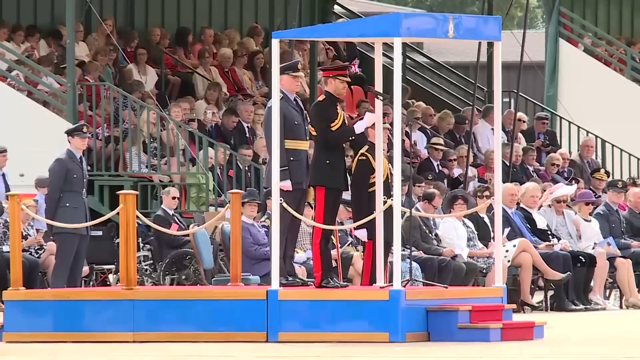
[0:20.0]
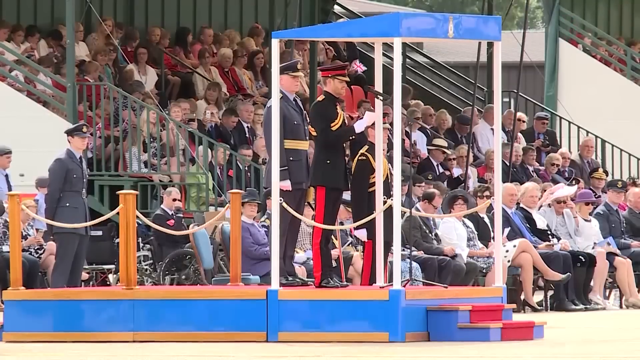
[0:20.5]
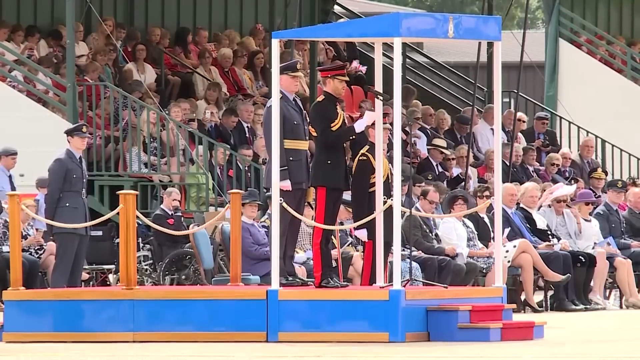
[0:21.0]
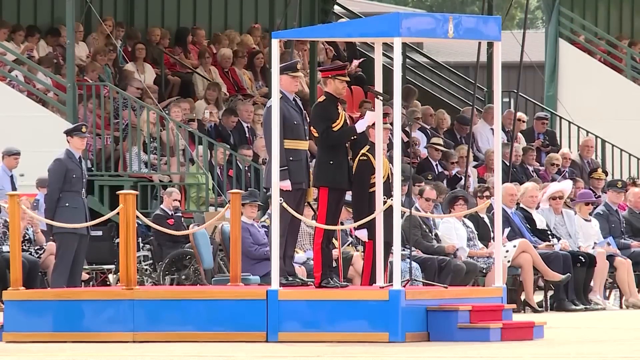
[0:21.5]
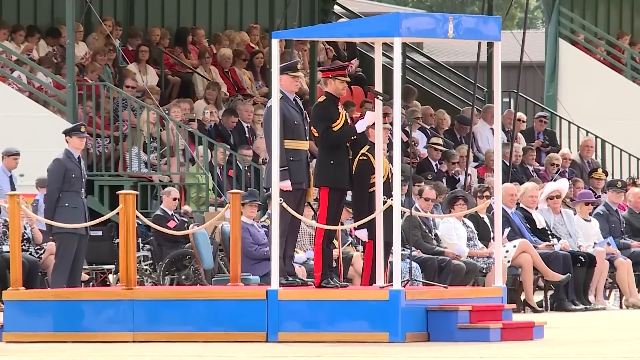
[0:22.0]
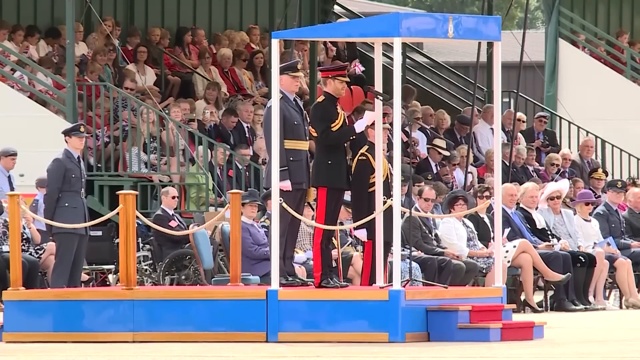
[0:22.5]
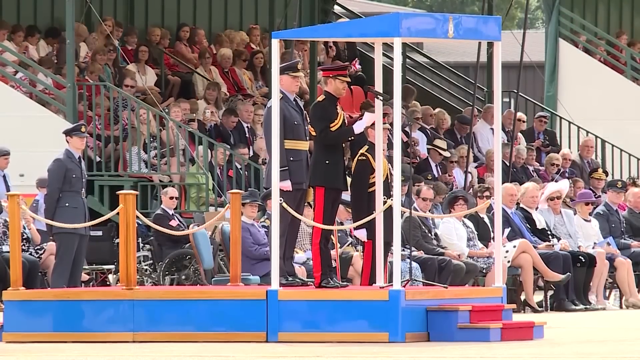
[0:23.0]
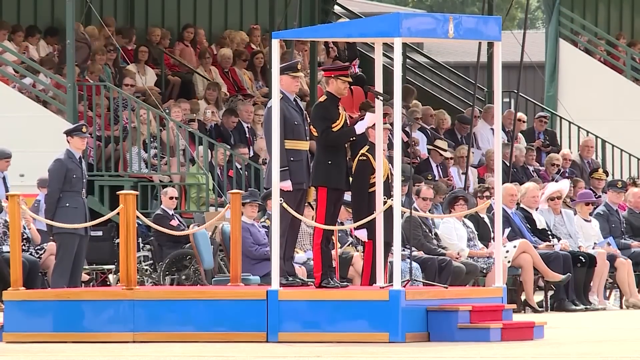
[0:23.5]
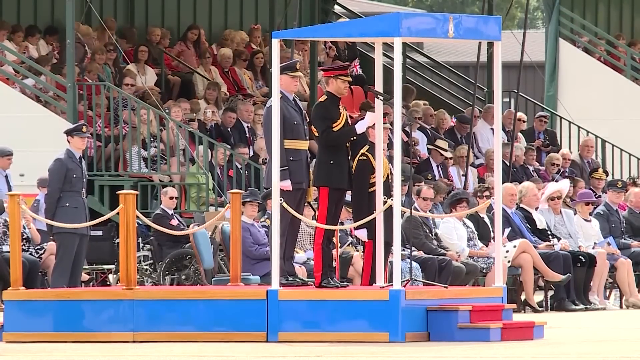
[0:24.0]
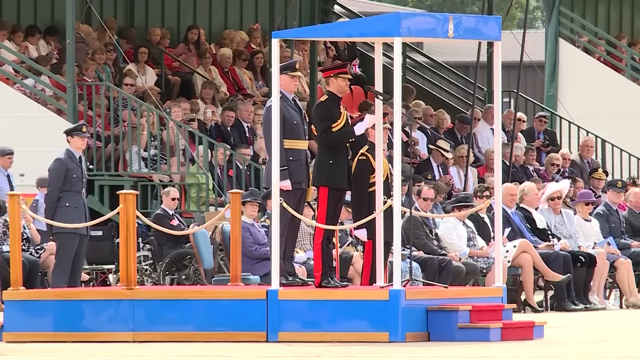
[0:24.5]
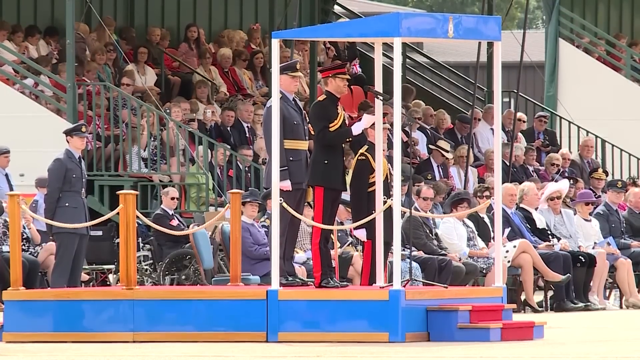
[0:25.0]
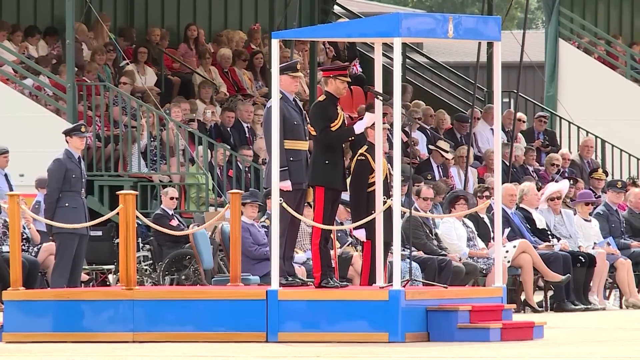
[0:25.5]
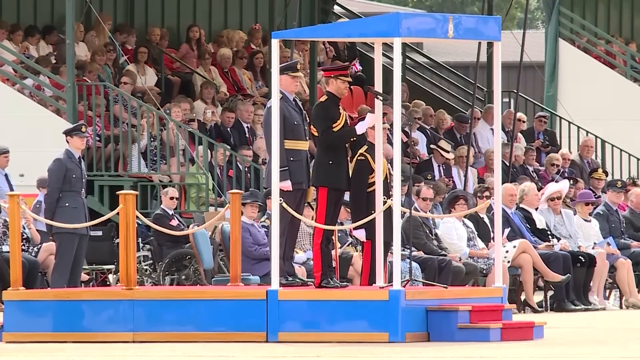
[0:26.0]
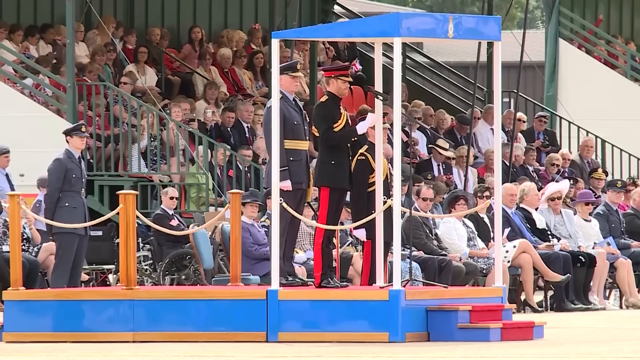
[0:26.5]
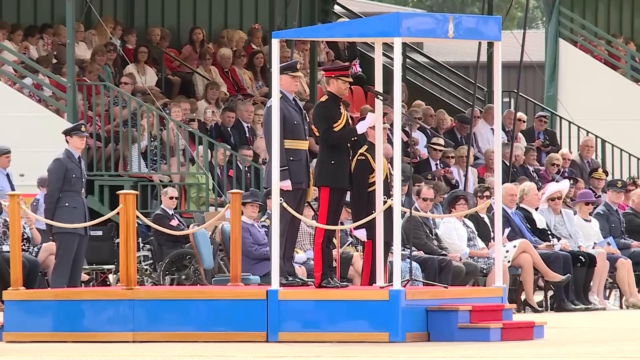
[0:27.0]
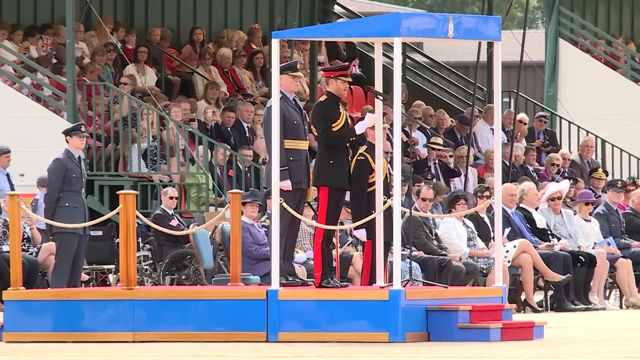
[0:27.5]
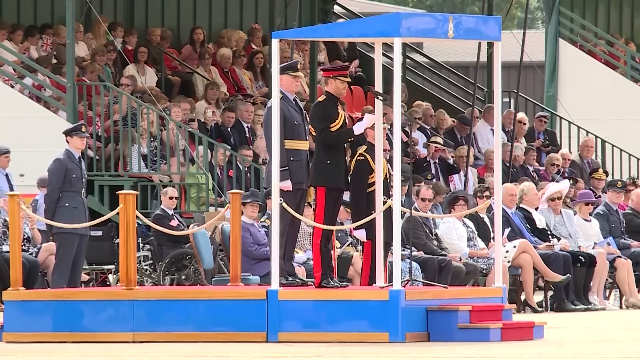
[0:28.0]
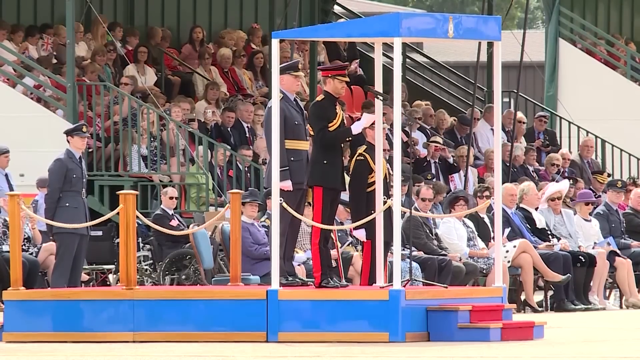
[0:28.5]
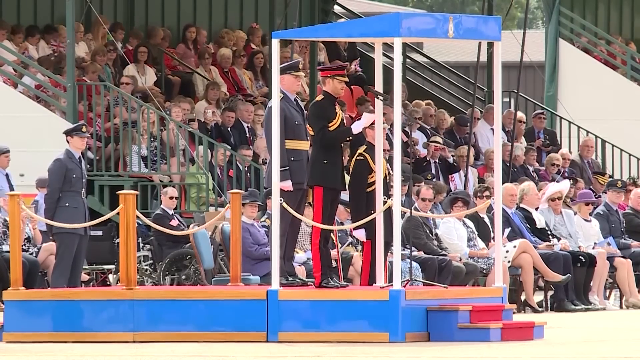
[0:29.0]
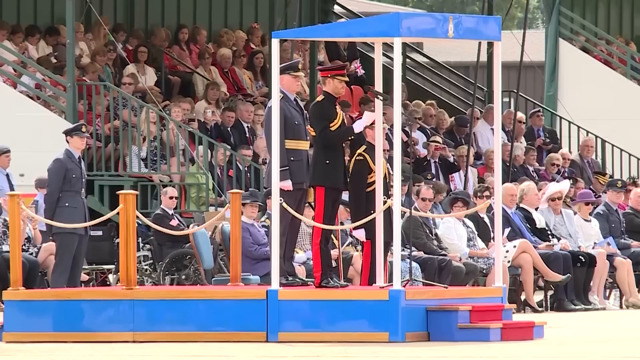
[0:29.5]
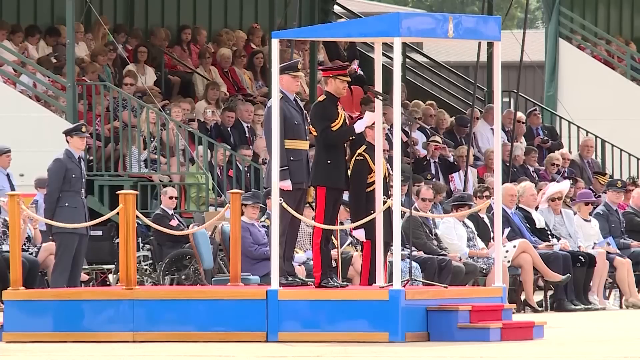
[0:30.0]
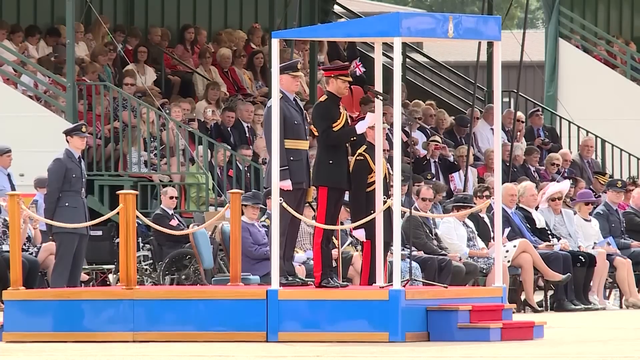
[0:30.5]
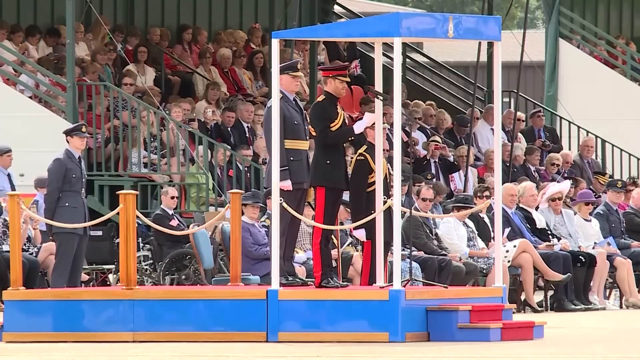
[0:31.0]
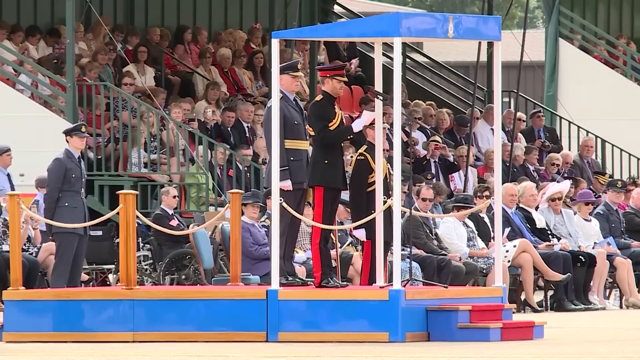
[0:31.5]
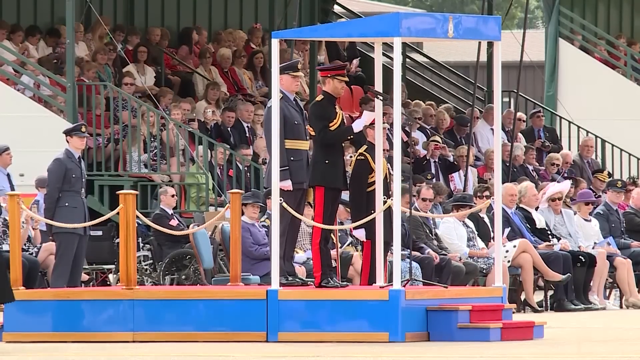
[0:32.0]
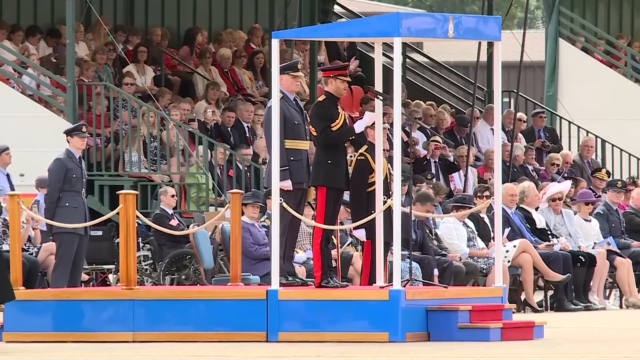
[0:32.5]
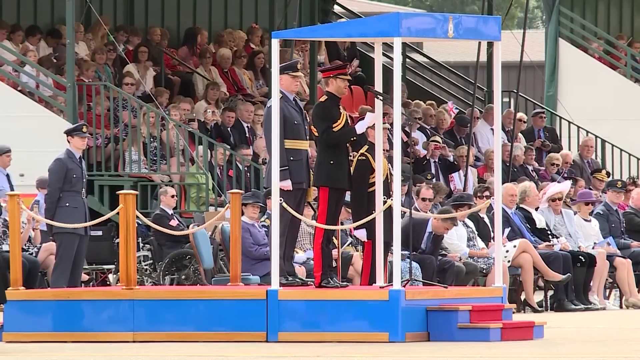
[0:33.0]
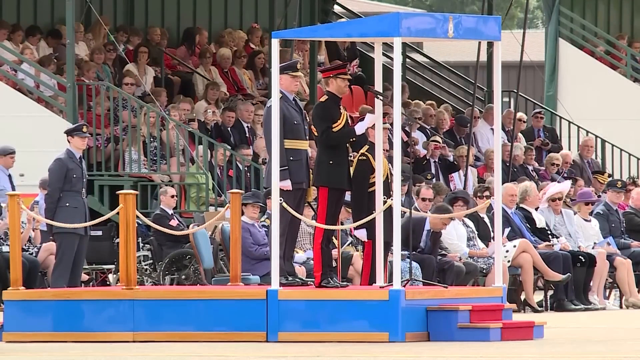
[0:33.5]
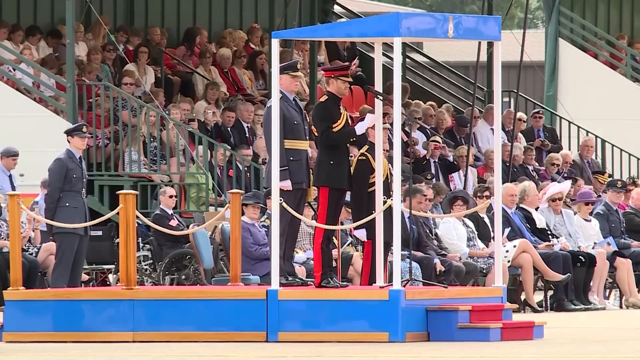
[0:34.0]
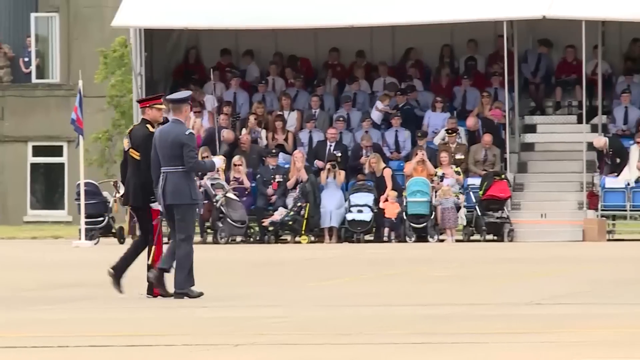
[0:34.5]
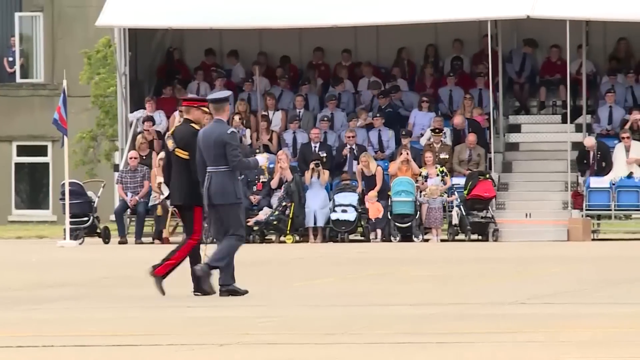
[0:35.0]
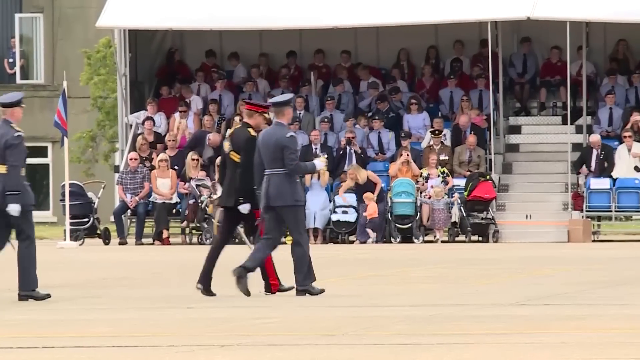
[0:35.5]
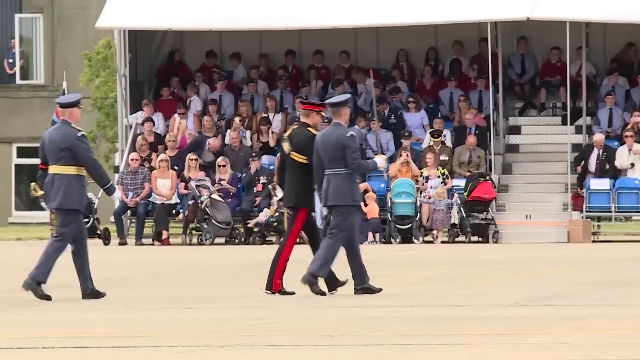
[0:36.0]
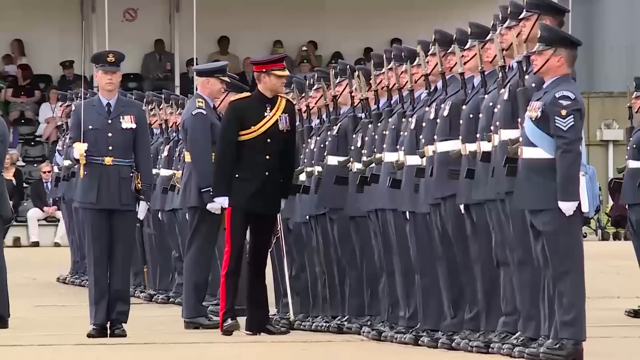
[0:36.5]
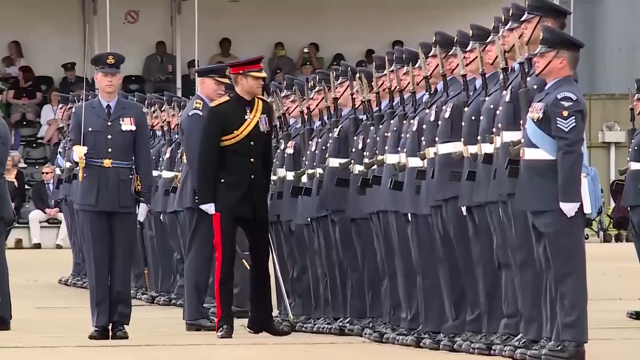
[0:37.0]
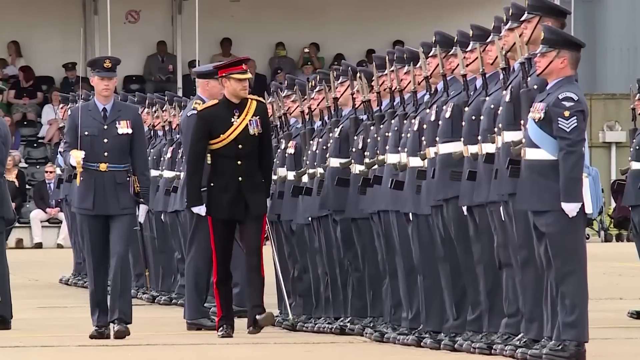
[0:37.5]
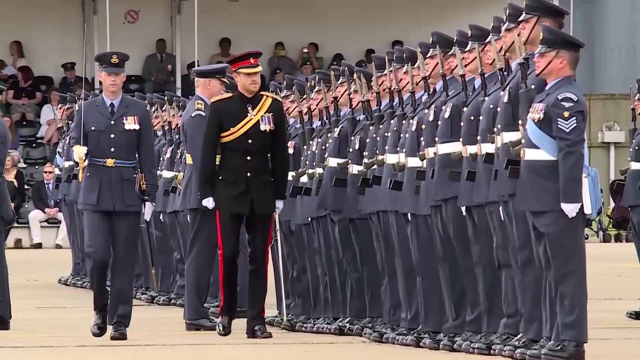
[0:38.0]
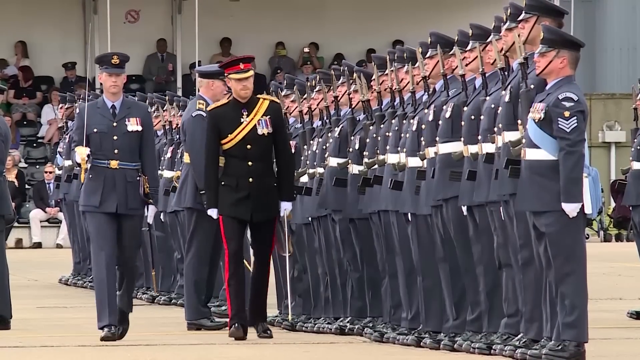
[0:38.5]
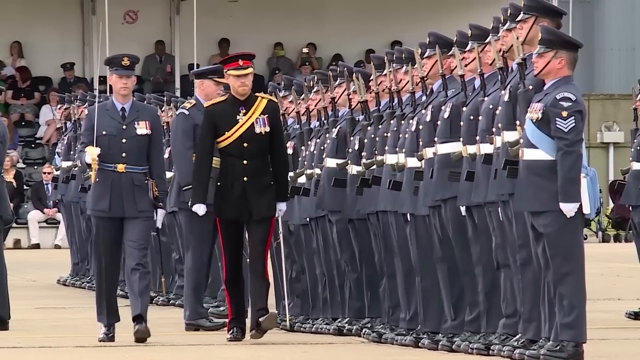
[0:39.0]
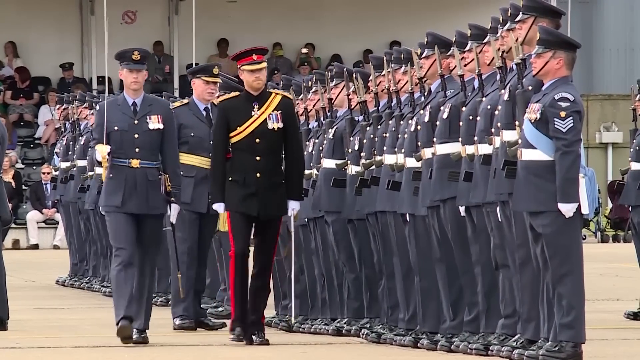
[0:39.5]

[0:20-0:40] An outdoor event takes place at some kind of military ceremony. Tiered seating in a big event area is pretty full, there is an area with people in wheelchairs, and a small stage with a little blue roof is in front of all of this. Three of the military men are visible, one holding a piece of paper. There is a lot of movement among the people in the seated area, and lots of flags are flying around; it seems to be quite a windy day. The camera then turns to the audience, and two men walk in front of the camera. Then the soldiers are all lined up with their bayonet guns, and Prince Harry walks in front of them. Two guards with big giant swords and grey military outfits walk alongside him.